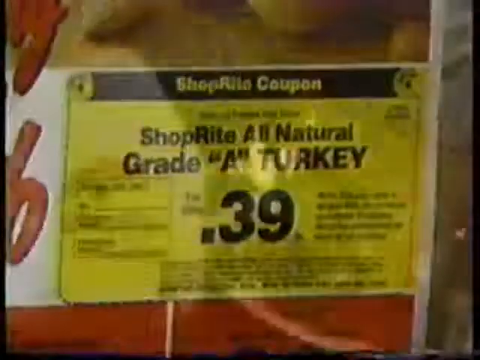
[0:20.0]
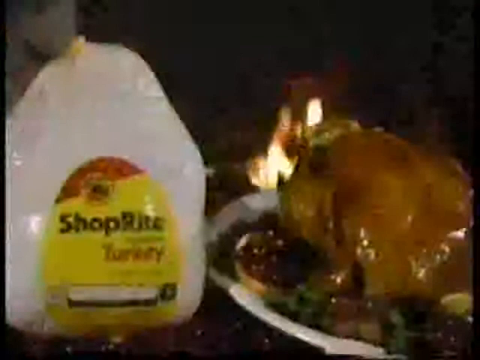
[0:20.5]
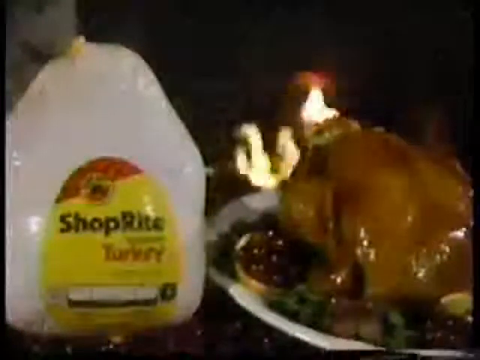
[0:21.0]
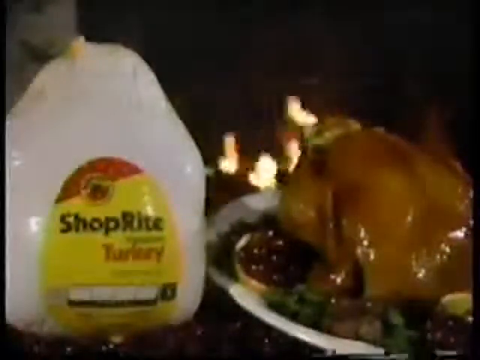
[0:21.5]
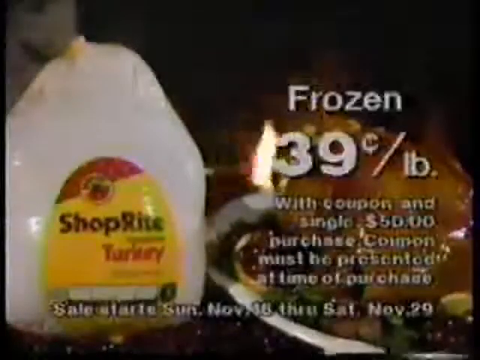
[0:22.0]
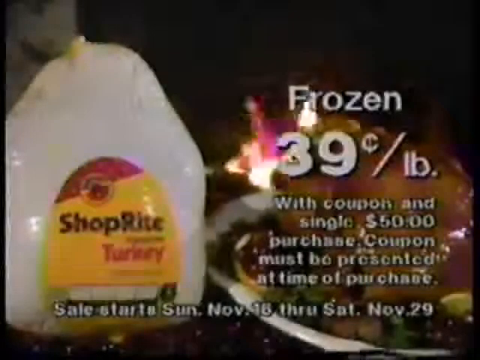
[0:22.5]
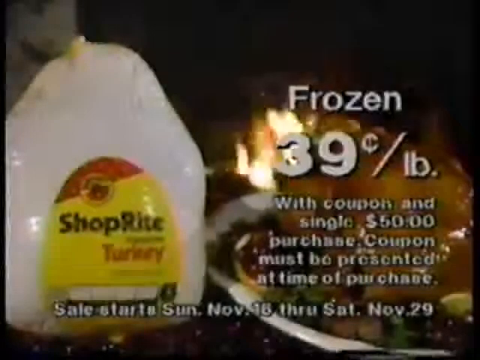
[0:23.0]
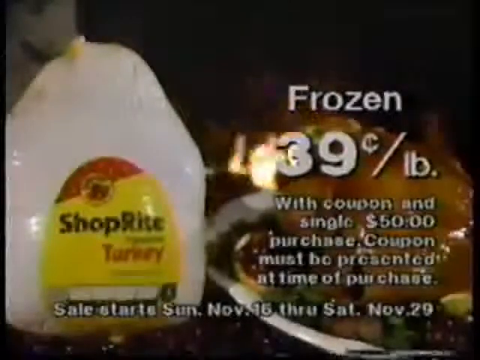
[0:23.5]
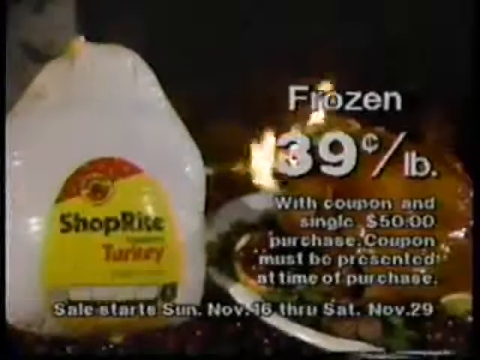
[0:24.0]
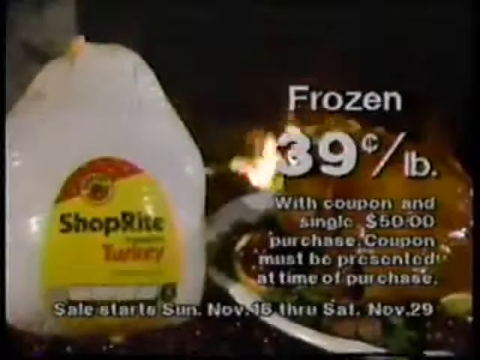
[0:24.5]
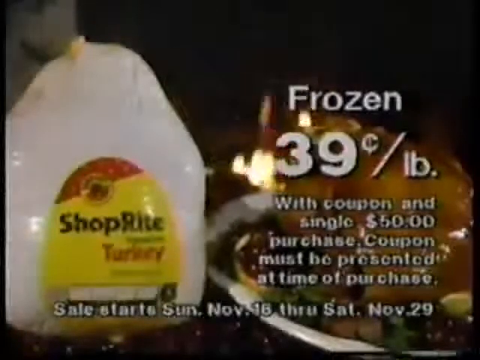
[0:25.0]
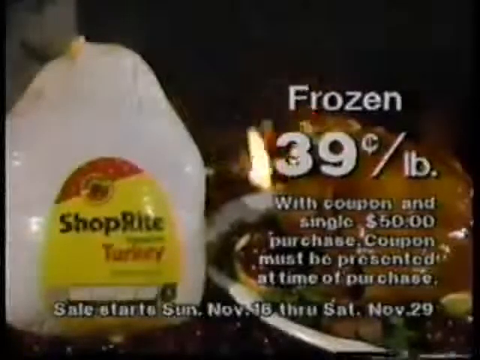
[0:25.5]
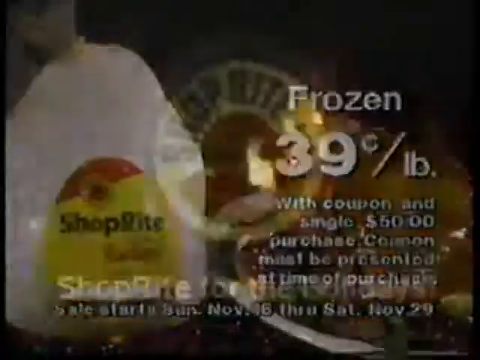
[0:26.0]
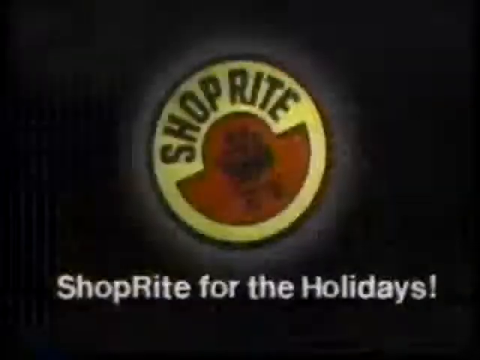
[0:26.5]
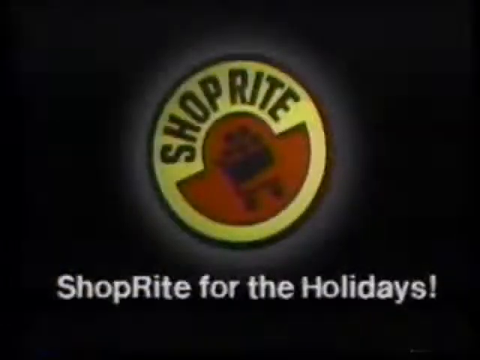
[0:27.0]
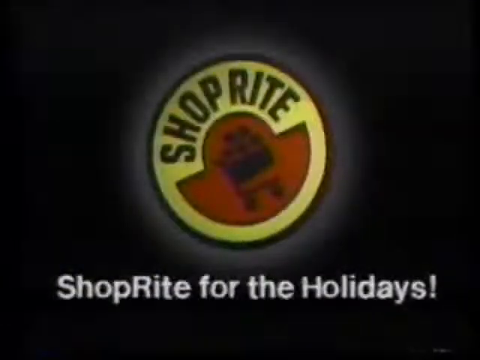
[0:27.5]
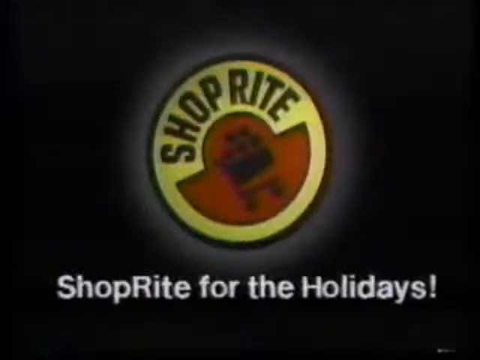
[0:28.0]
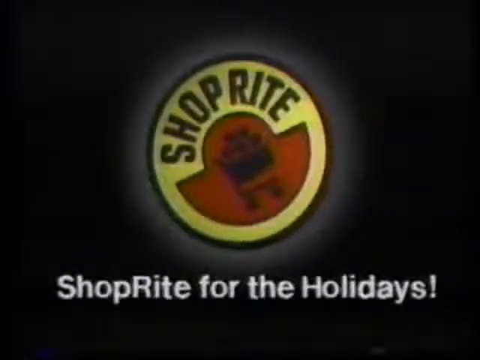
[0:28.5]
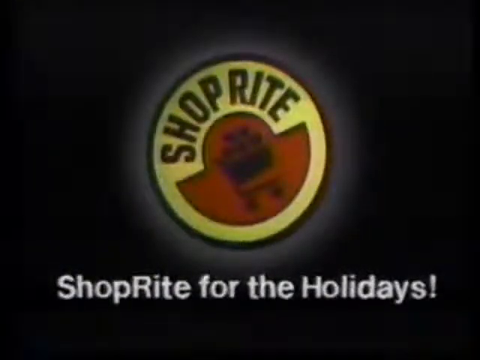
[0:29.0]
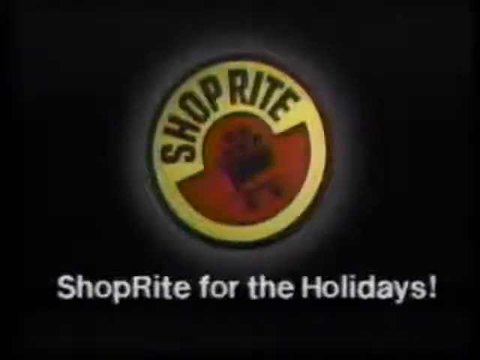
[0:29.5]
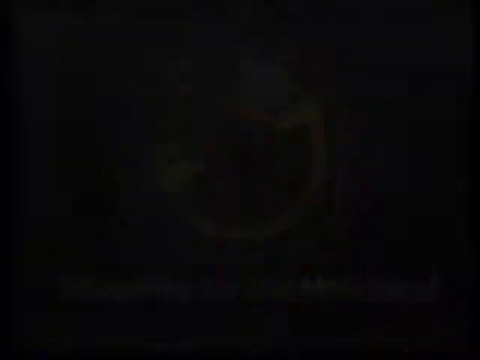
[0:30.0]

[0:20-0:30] In an advertisement for the supermarket ShopRite and a sale on its grade A turkey, the uncooked turkey breast is displayed in an upright position on the left against a solid black background. Black and red text reads "ShopRite turkey." On the right, white text reads "frozen." Below that, in large bold text, is "$0.39 a pound." Below that, in smaller text: "with coupon and single $50 purchase, coupon must be presented at time of purchase." The last line beneath reads "sales starts Sunday, November 16, through Saturday, November 29." A cooked turkey breast is on the right, with a fireplace fire burning in the background. The scene closes with the ShopRite logo above in yellow and red with a black illustration of a shopping cart, and under it white text reading "ShopRite for the holidays!"